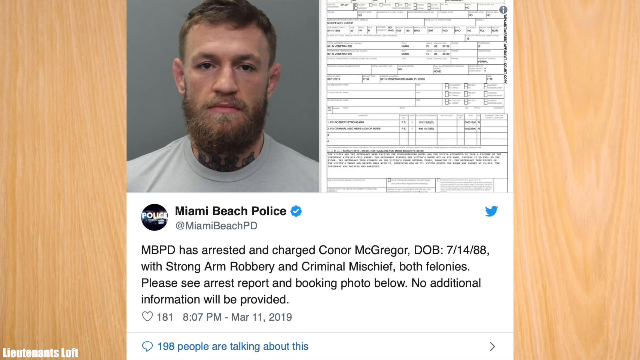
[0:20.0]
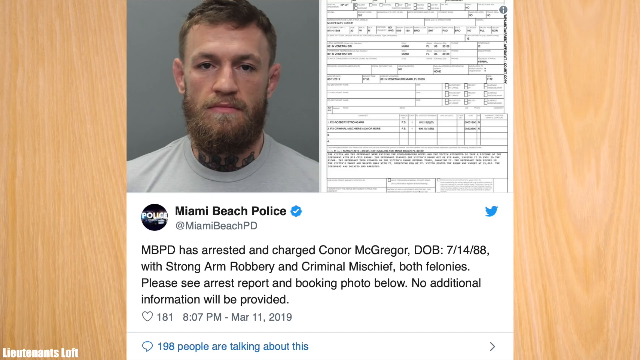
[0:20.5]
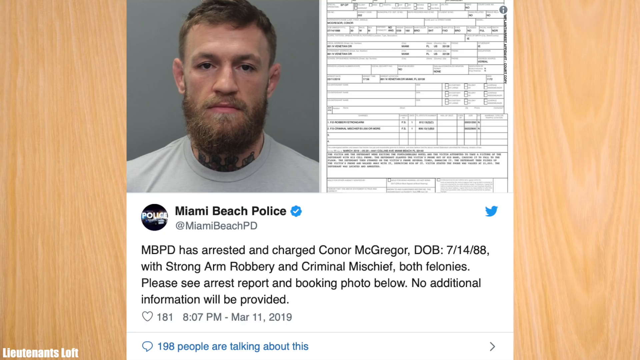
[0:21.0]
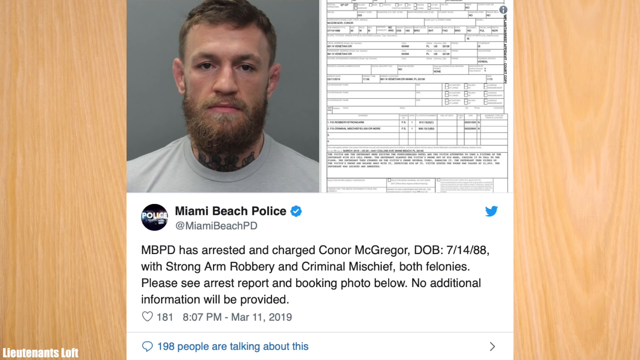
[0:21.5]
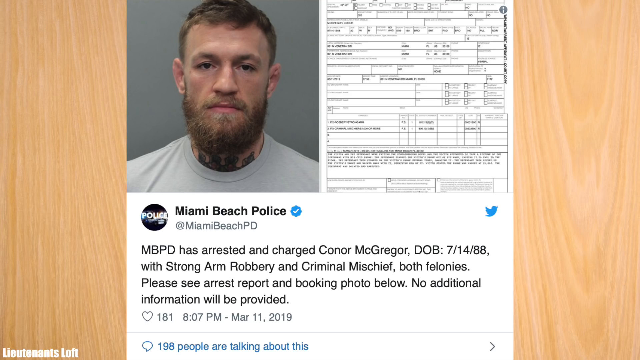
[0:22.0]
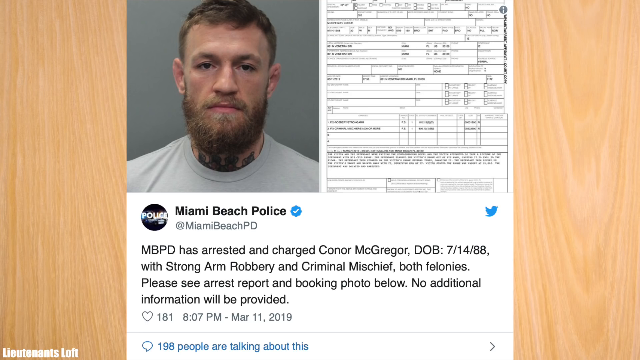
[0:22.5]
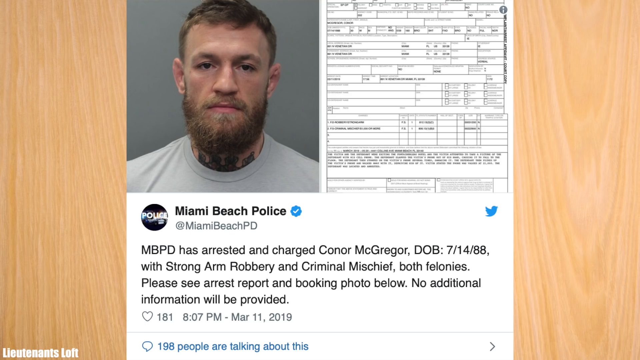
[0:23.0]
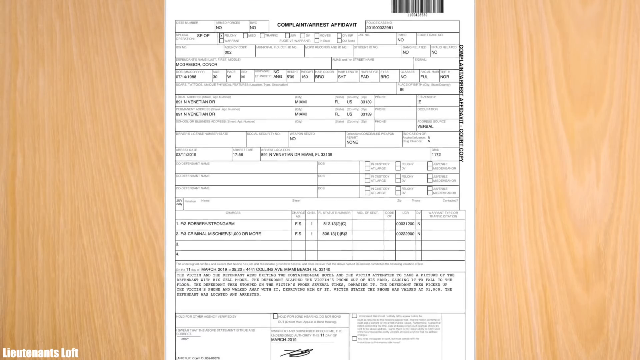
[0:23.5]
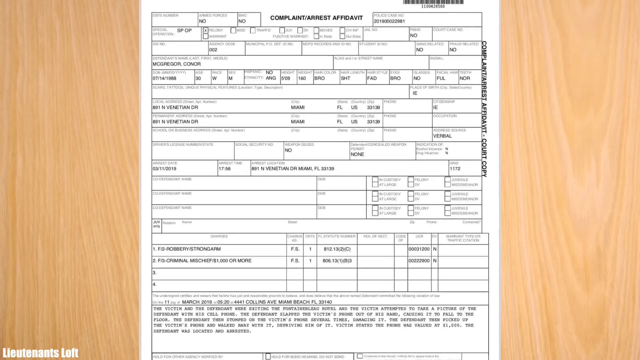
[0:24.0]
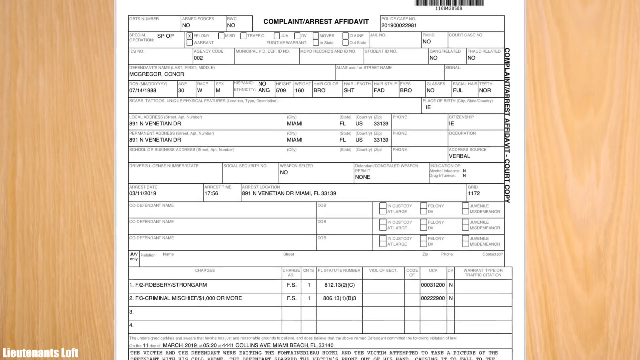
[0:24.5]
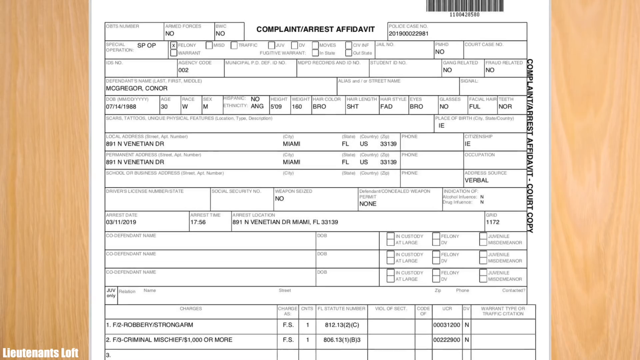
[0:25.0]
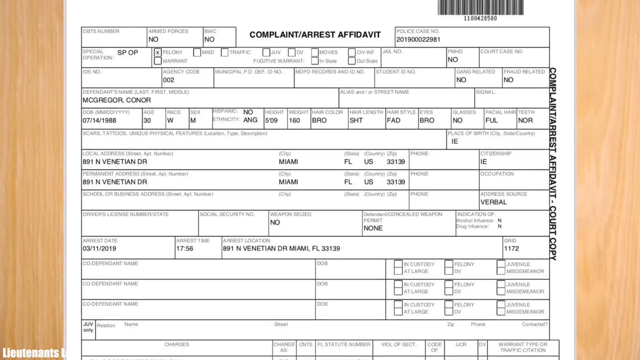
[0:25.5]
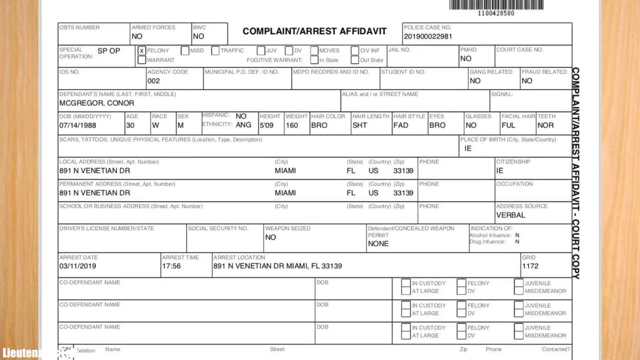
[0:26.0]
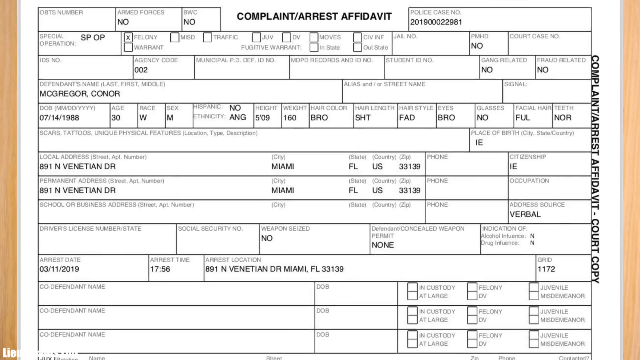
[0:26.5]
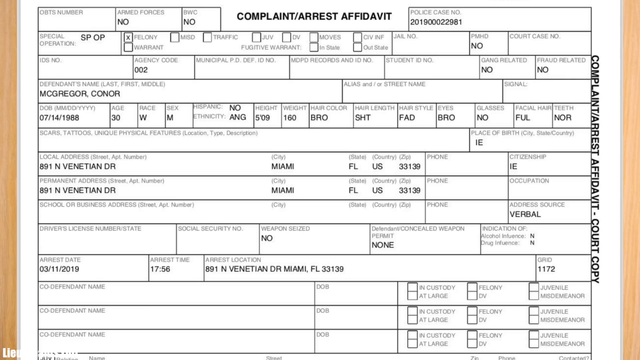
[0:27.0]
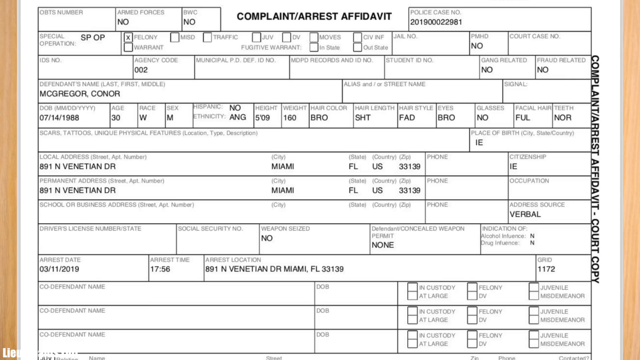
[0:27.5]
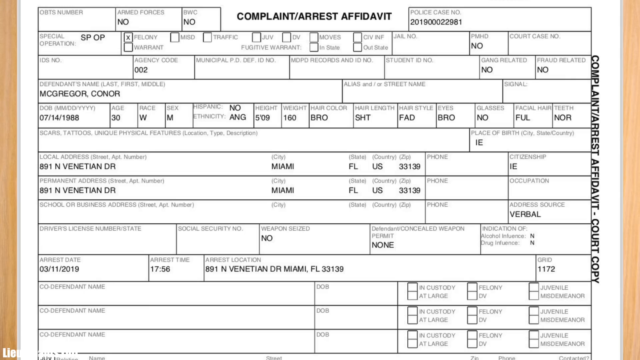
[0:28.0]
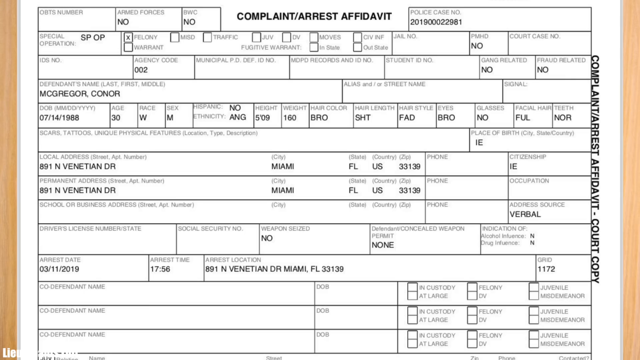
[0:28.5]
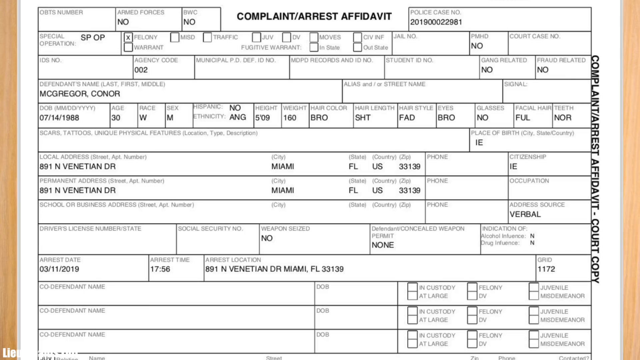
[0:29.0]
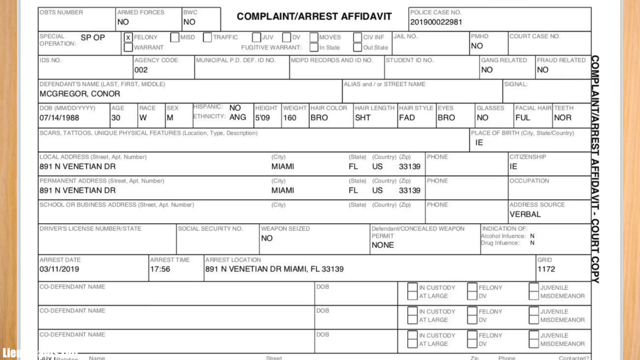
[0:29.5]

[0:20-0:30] The charge sheet and complaint arrest affidavit for Conor McGregor are shown, with his details filled in. It shows that he has been charged with strong armed robbery and criminal mischief.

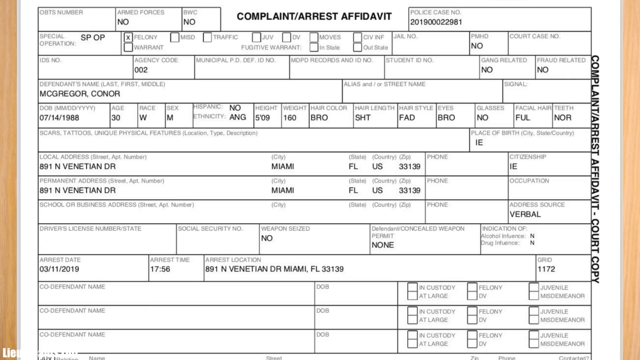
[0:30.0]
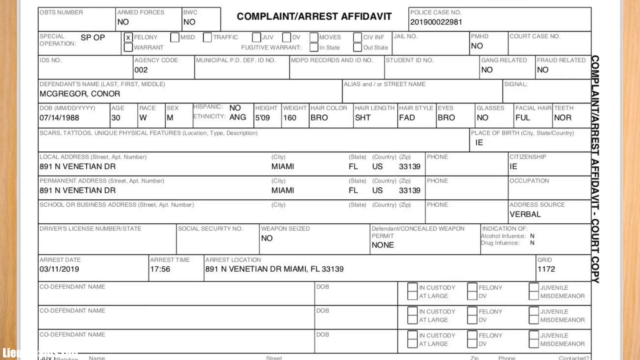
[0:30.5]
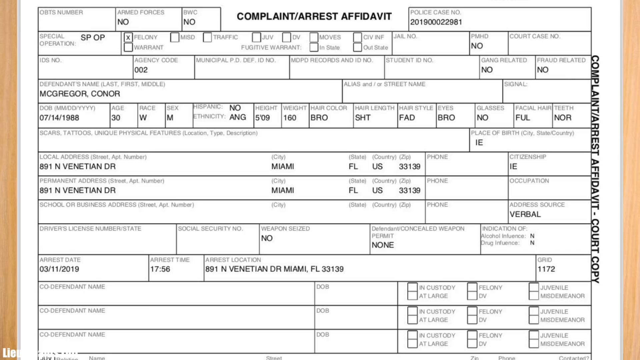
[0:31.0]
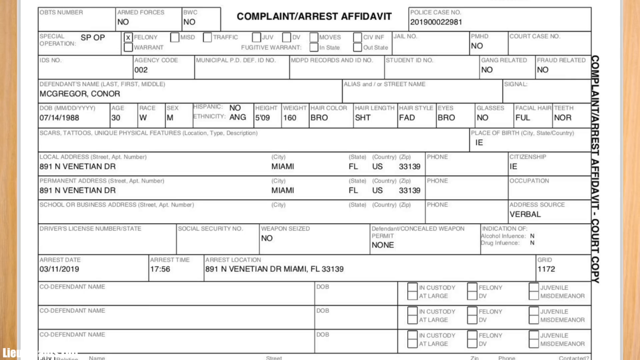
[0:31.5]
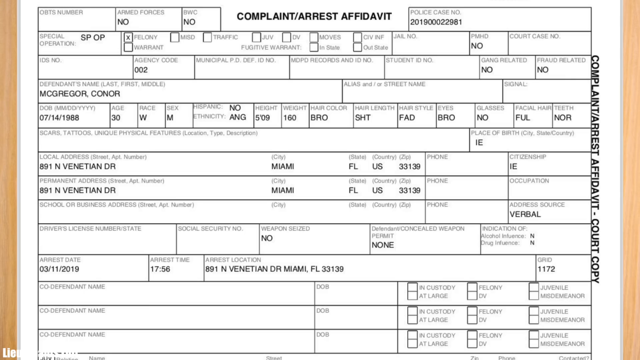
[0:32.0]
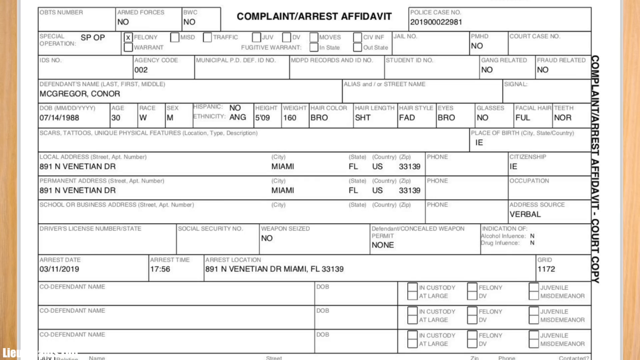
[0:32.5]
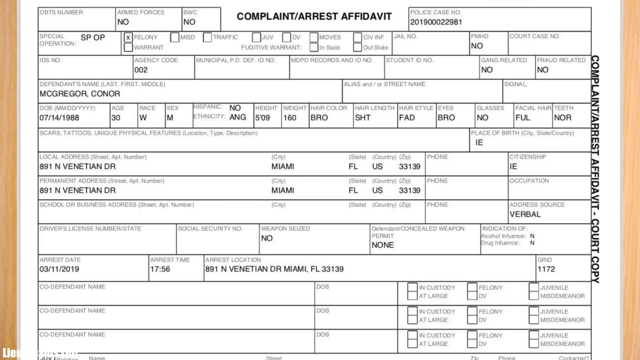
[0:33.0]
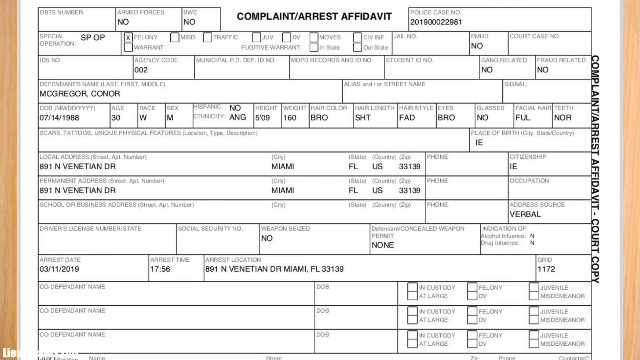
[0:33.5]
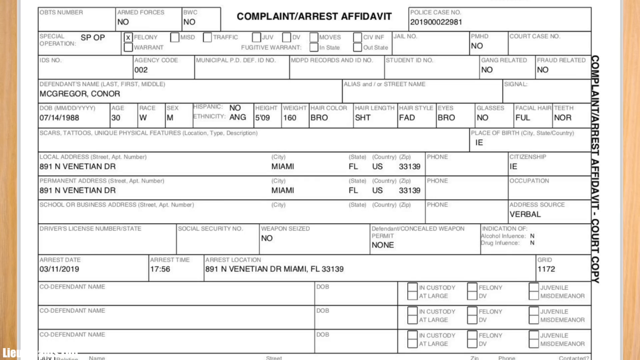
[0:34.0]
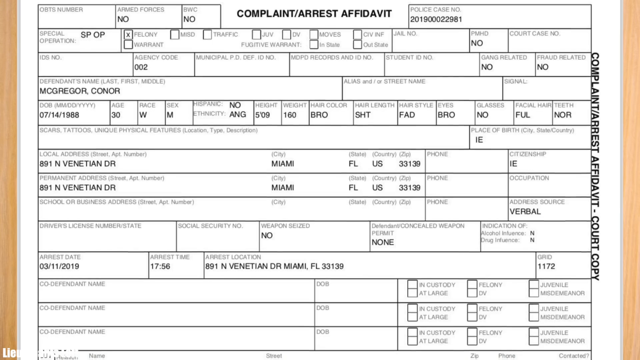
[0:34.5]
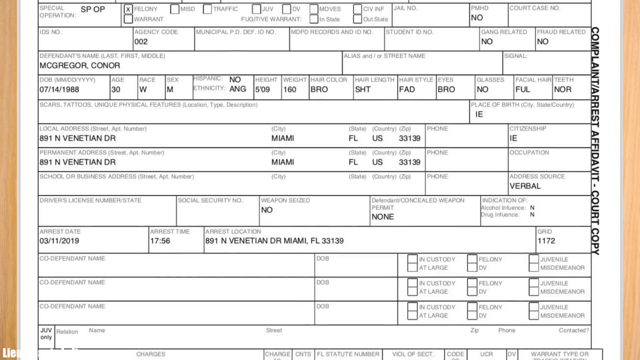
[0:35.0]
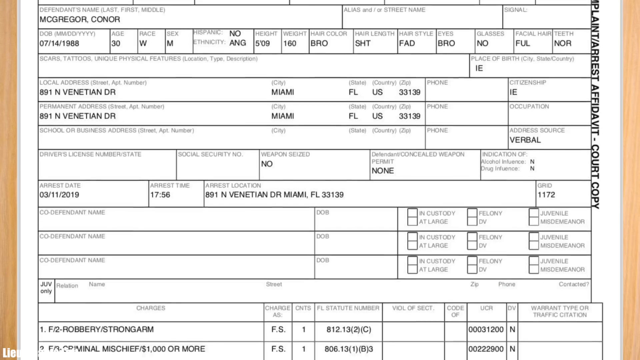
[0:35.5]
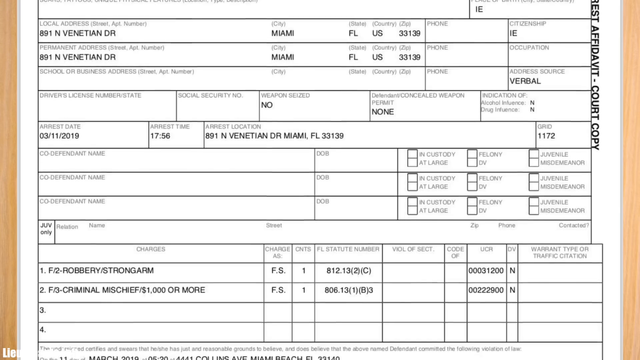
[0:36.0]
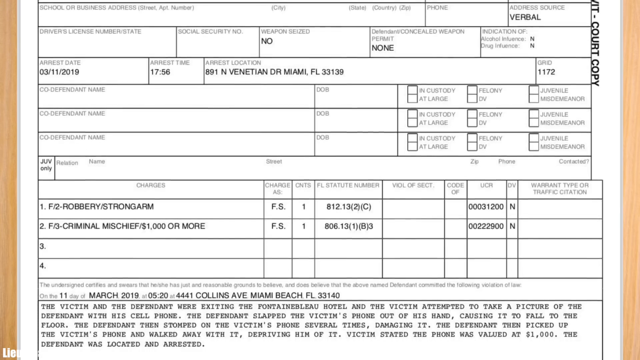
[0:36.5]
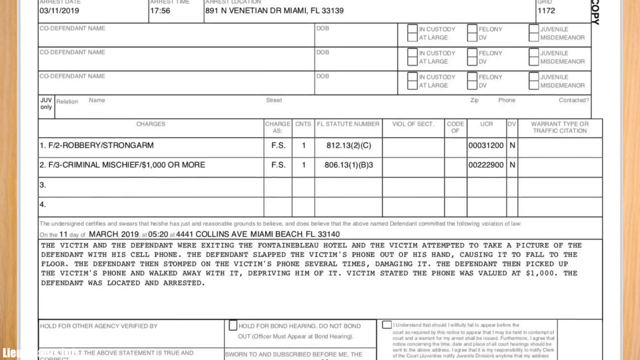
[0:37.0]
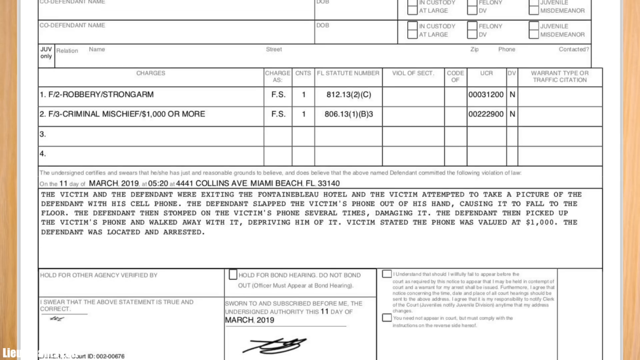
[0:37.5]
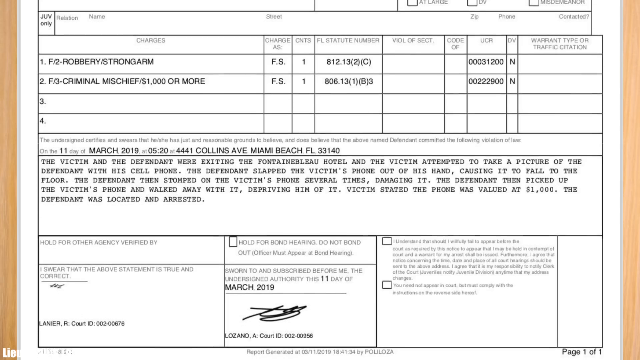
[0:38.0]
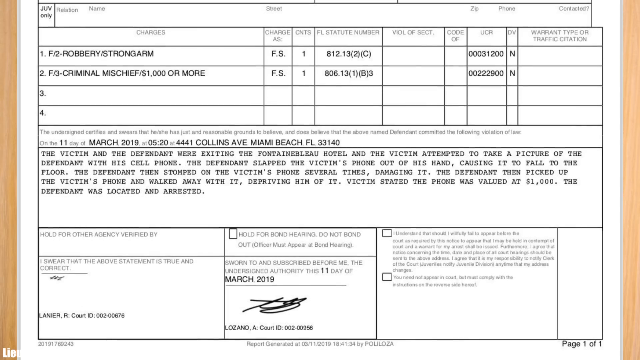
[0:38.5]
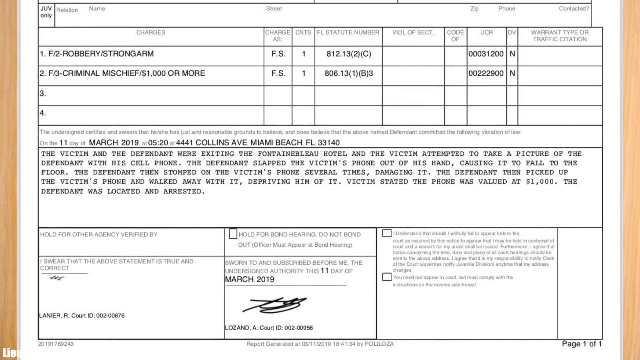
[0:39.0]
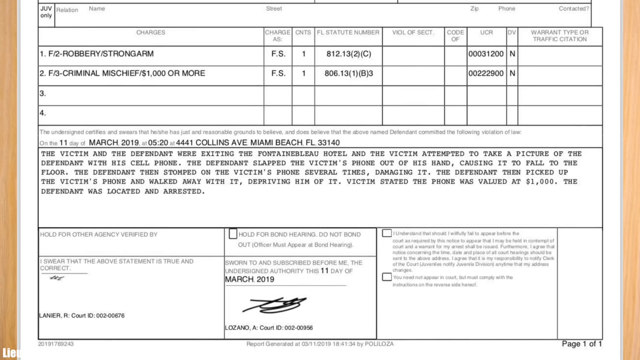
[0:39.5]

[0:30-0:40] The arrest affidavit is scrolled down, showing different details about him: a signature, a date stamp and a time stamp, details of the arrest charge, his birth date, his initials, his name, and a description of what led to the arrest.